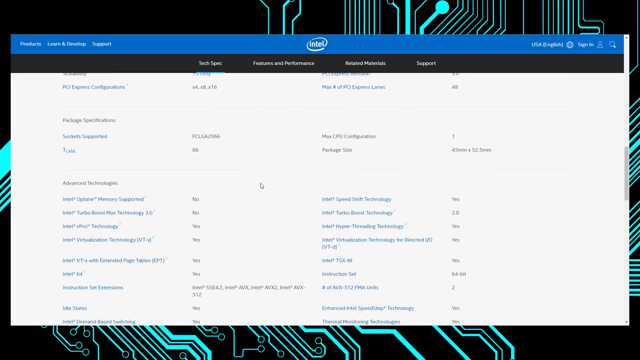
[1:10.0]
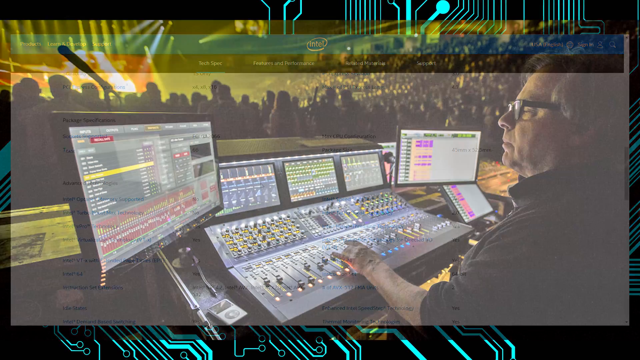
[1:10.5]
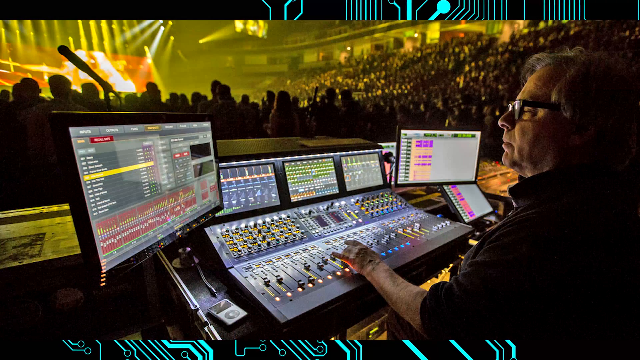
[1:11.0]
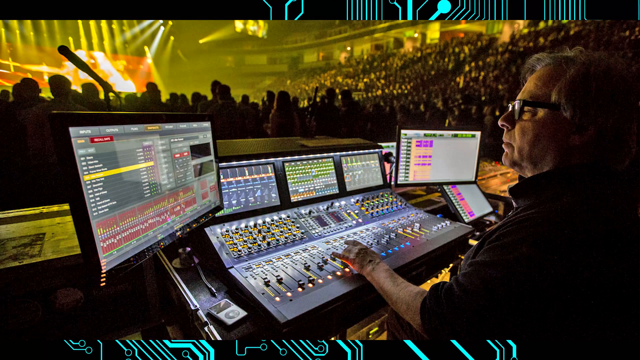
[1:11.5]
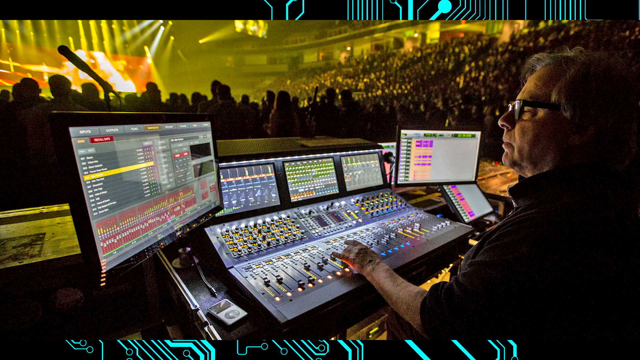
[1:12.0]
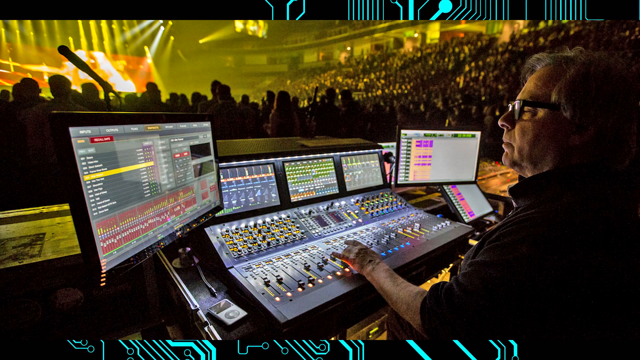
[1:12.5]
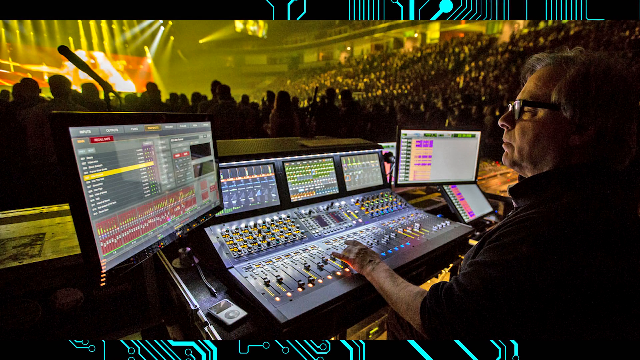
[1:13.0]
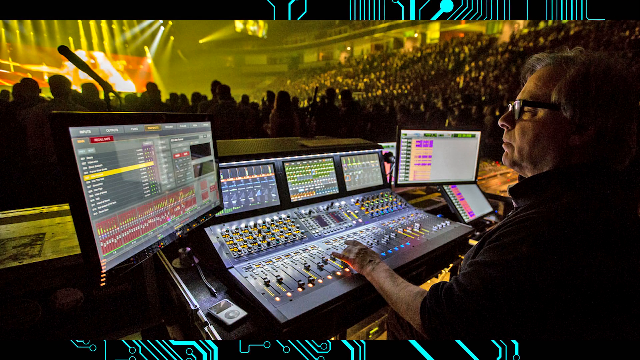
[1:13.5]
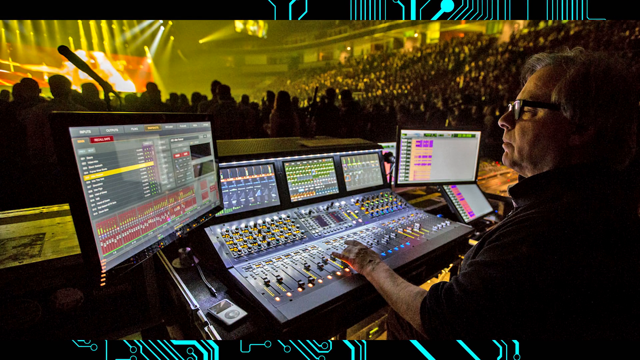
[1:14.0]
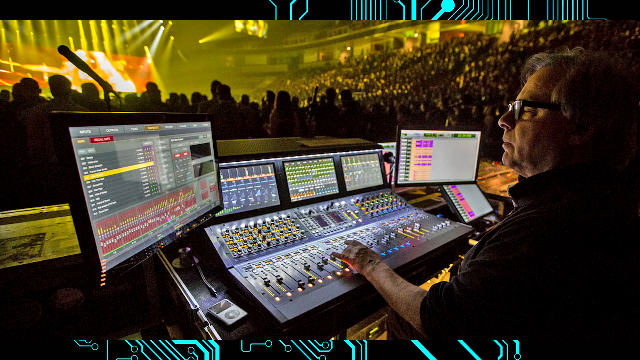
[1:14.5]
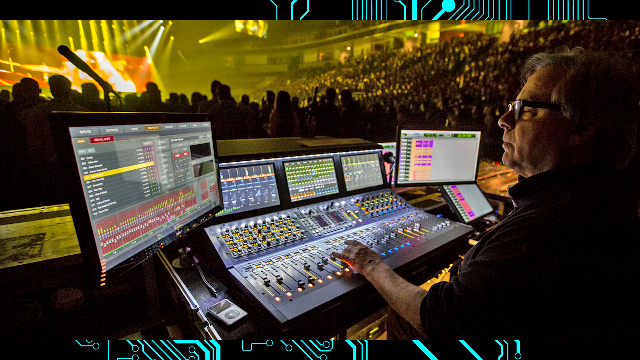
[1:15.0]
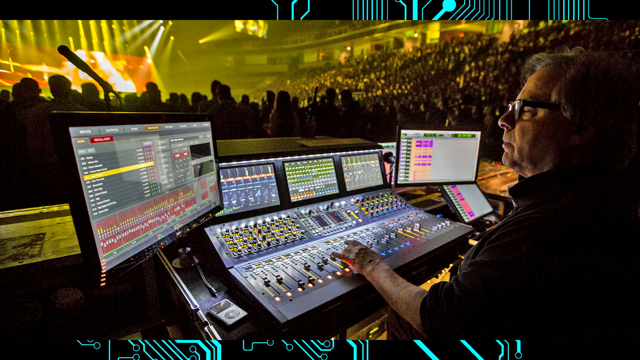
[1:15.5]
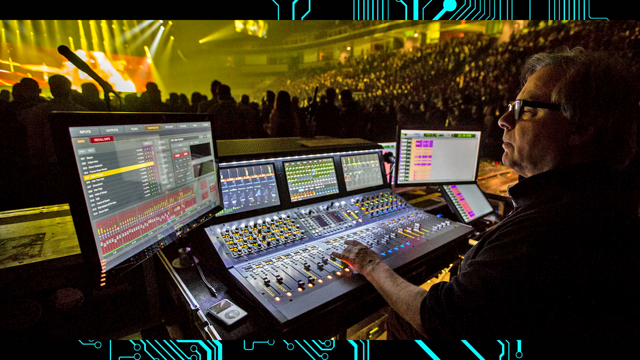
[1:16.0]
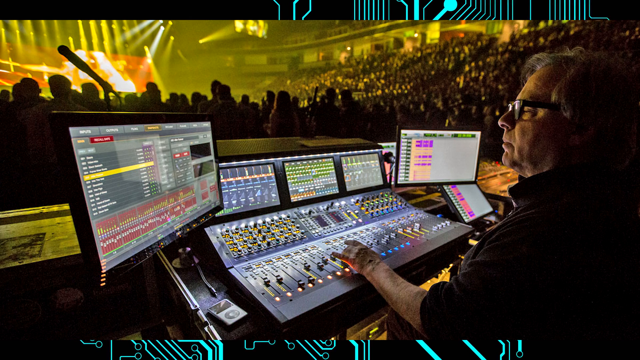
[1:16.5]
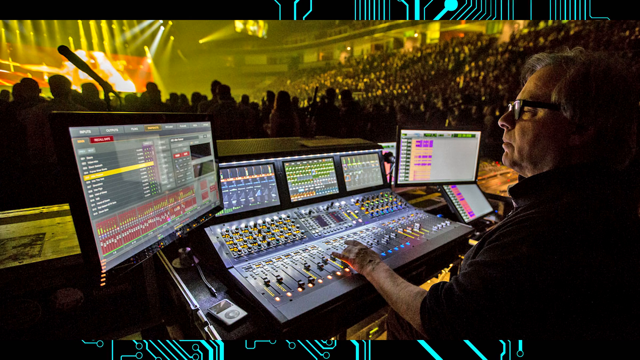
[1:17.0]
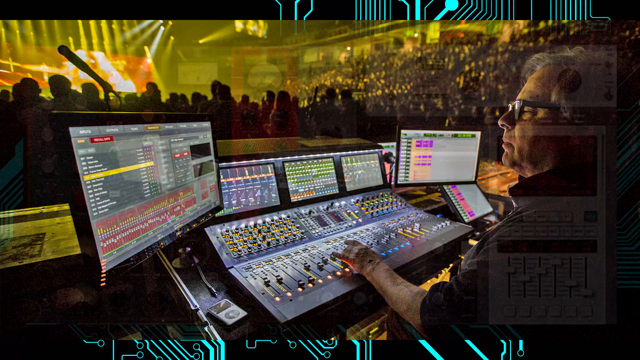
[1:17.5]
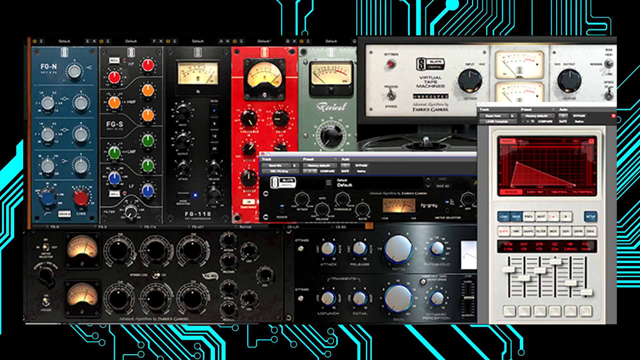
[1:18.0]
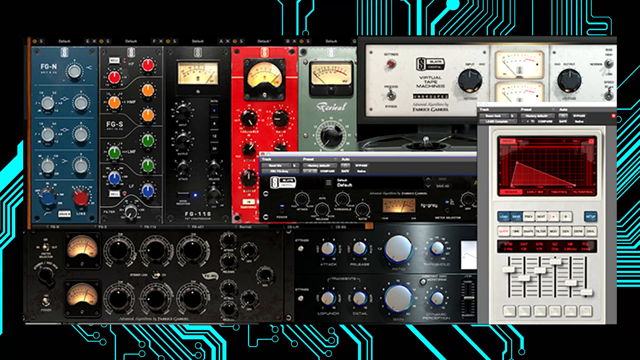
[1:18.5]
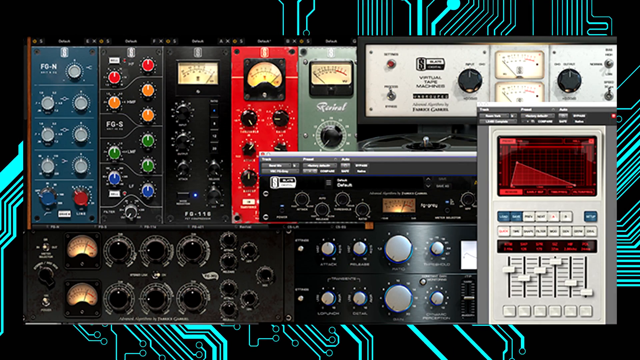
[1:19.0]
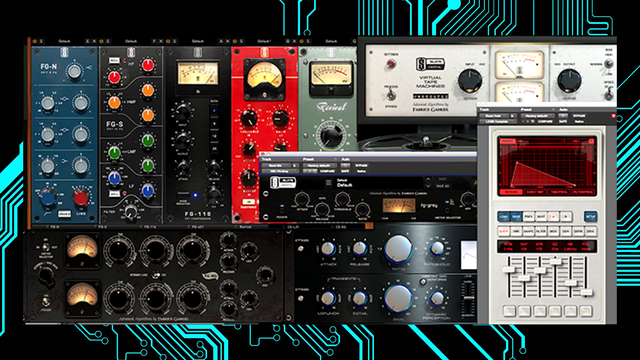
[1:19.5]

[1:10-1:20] A man with glasses works at a mixing console with multiple screens, apparently at a concert in what looks like an arena. It is very dark. The console has faders and two screens, one showing Pro Tools, and a screen comes up with multiple channel plugins. The crowd is visible in the background along with the stage, which has a yellowish-greenish tint. Finally, a screen with many plugins is superimposed, including some compressors and other outboard gear plugins.